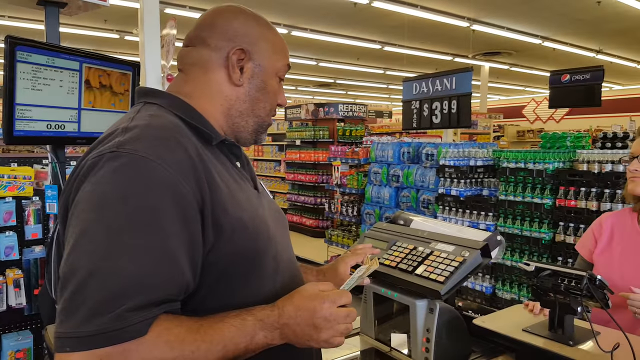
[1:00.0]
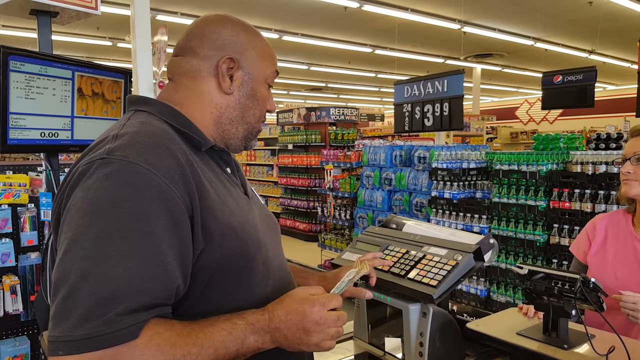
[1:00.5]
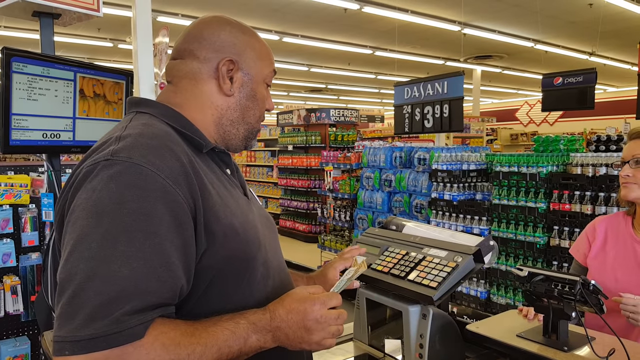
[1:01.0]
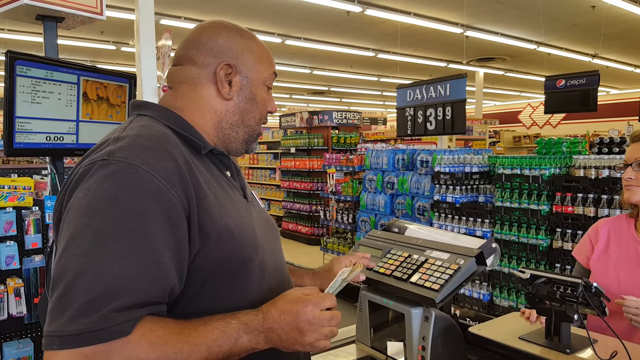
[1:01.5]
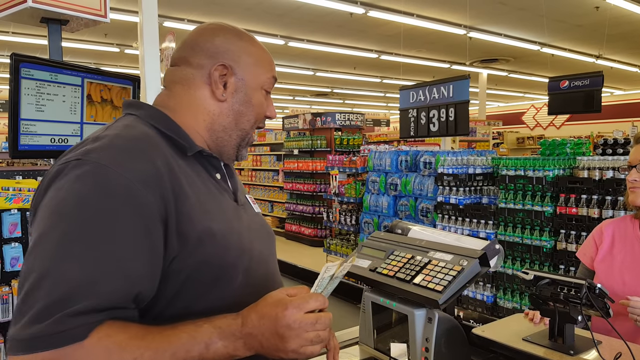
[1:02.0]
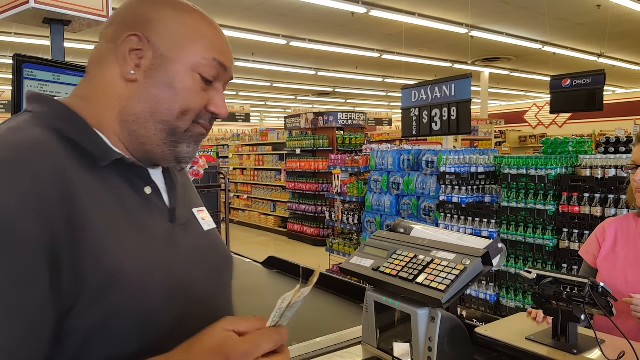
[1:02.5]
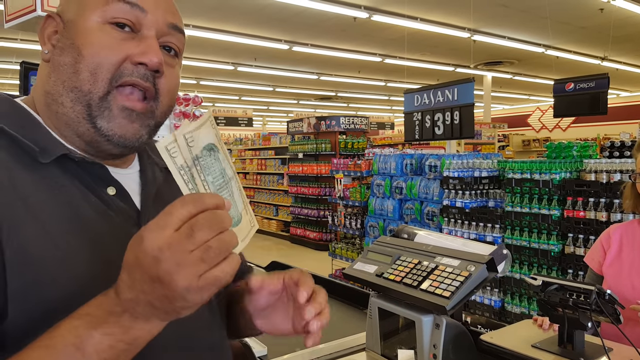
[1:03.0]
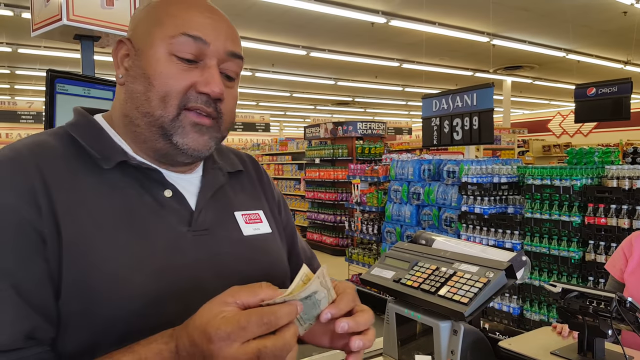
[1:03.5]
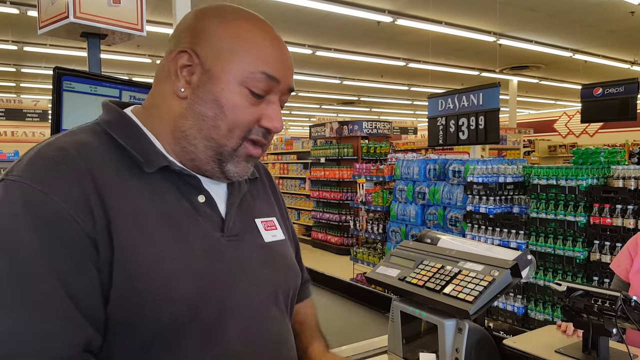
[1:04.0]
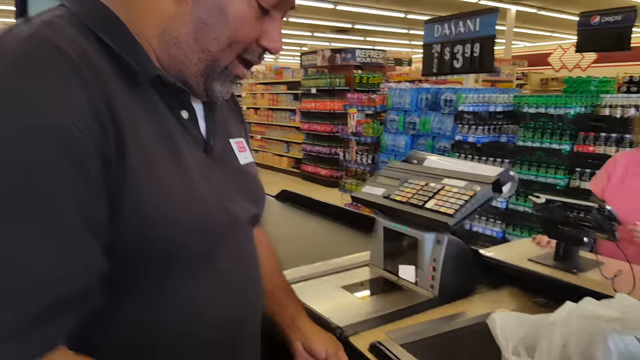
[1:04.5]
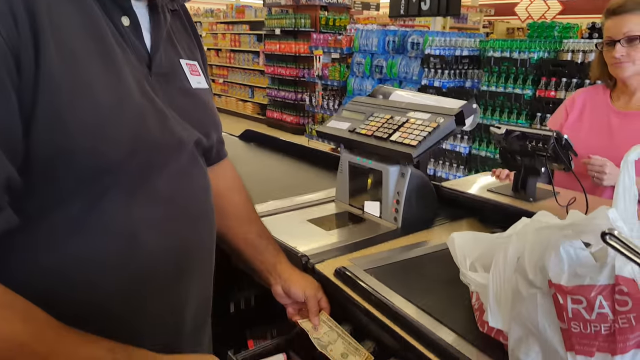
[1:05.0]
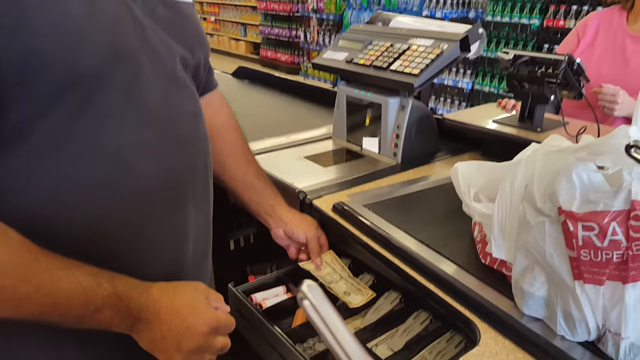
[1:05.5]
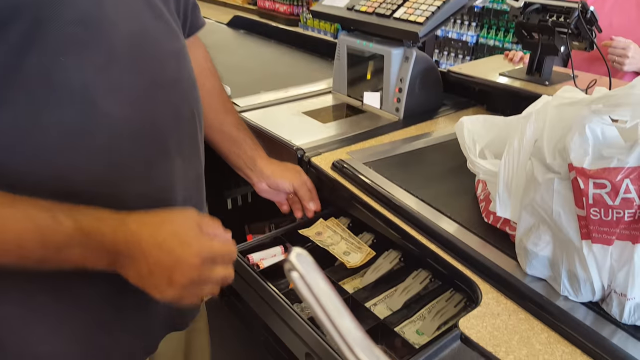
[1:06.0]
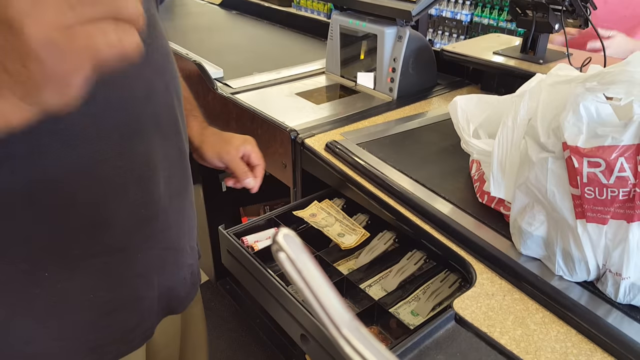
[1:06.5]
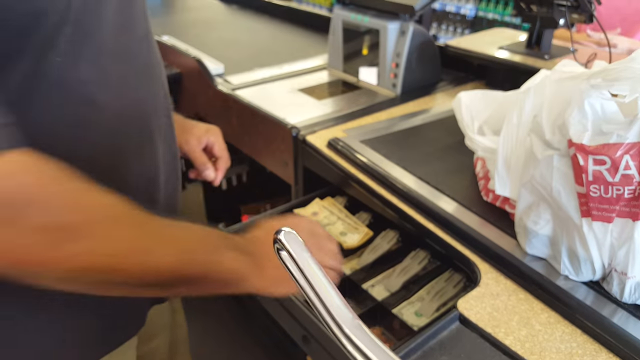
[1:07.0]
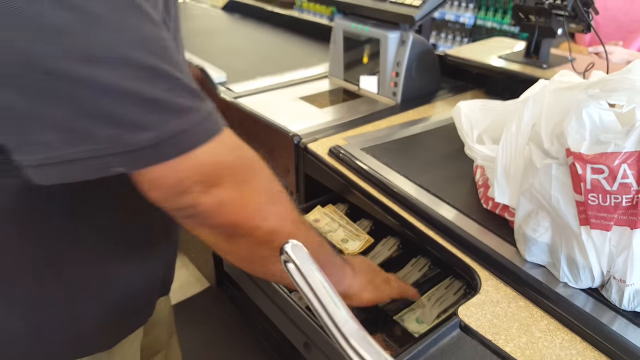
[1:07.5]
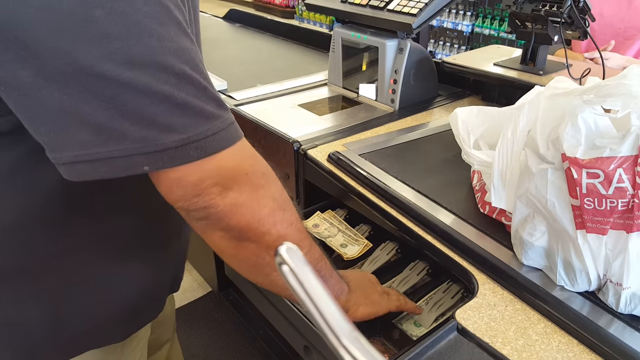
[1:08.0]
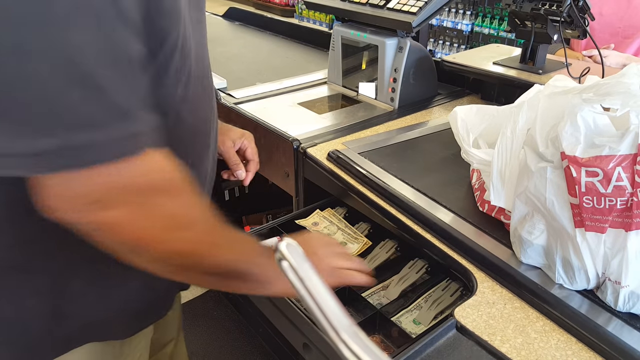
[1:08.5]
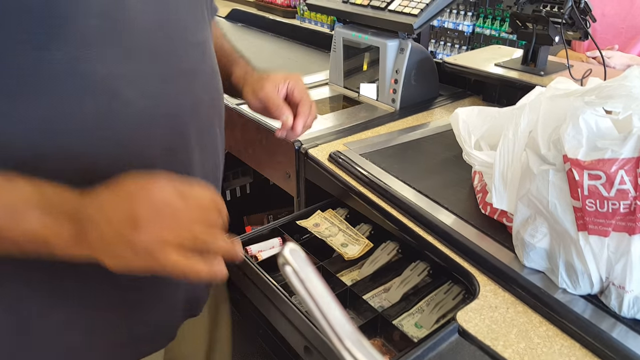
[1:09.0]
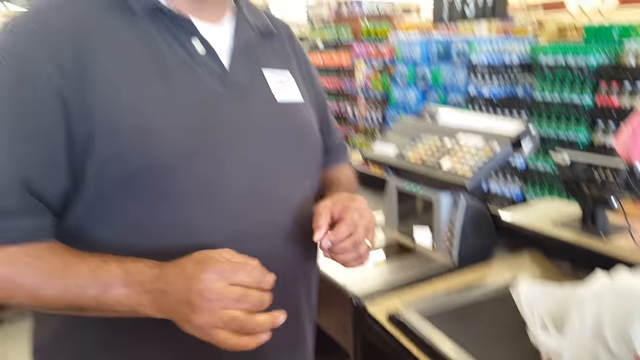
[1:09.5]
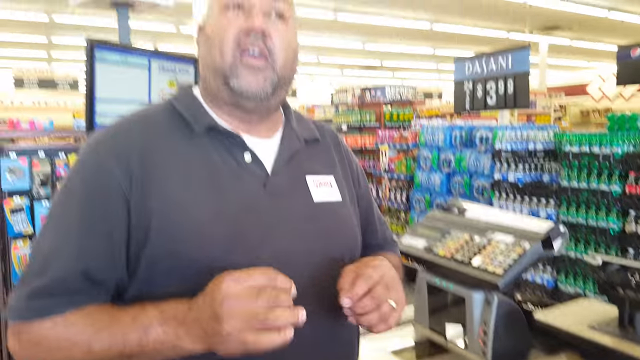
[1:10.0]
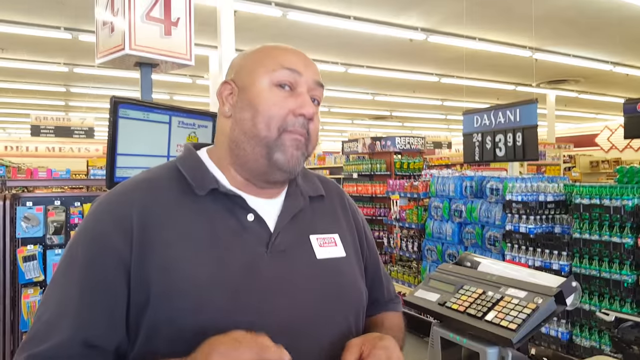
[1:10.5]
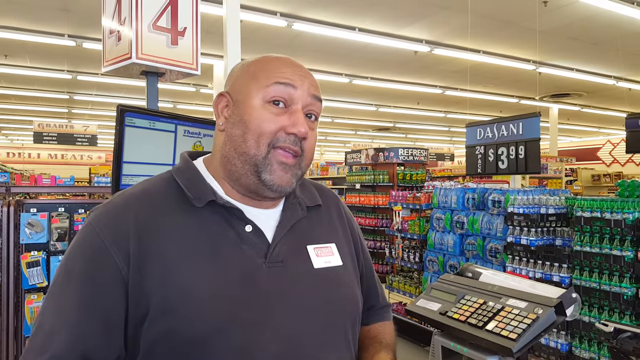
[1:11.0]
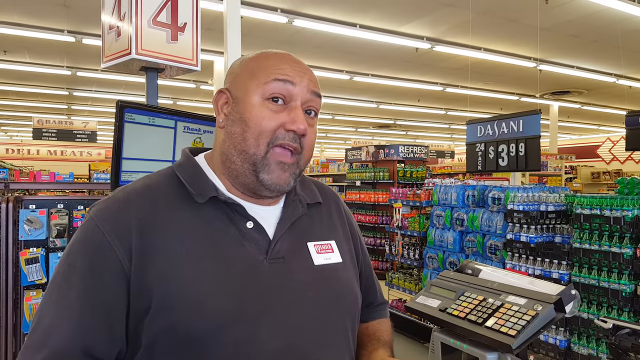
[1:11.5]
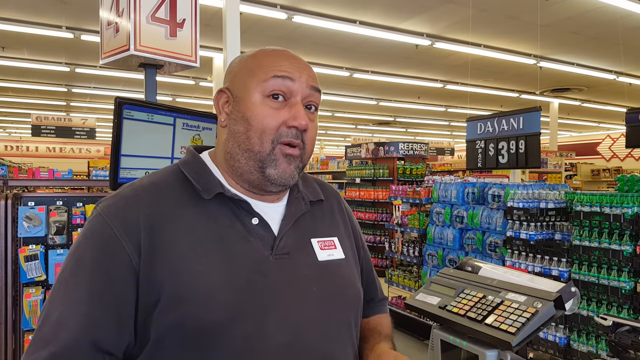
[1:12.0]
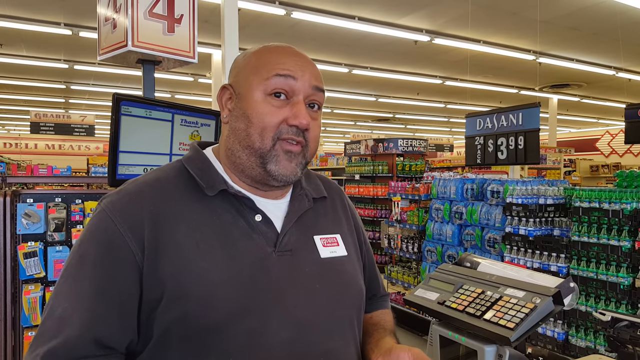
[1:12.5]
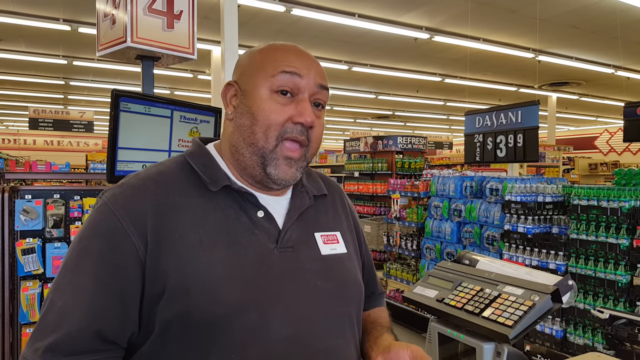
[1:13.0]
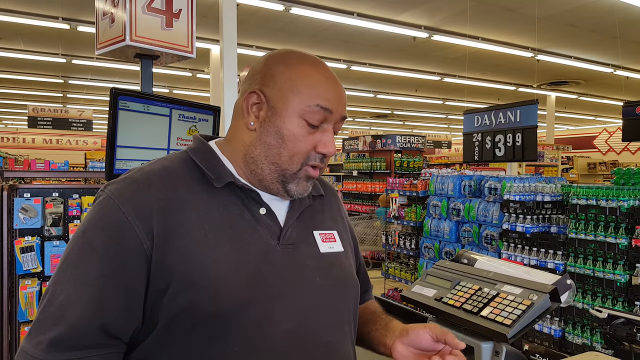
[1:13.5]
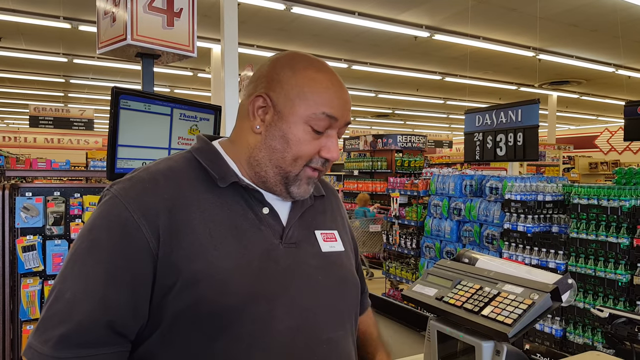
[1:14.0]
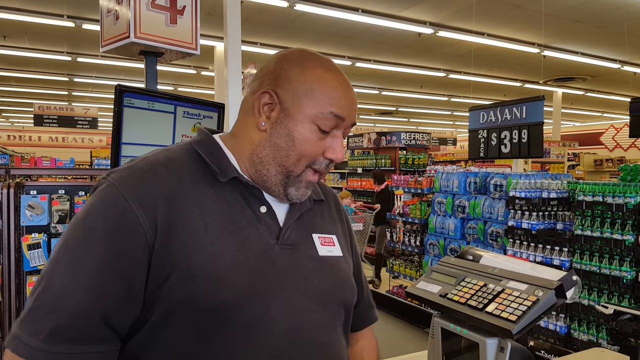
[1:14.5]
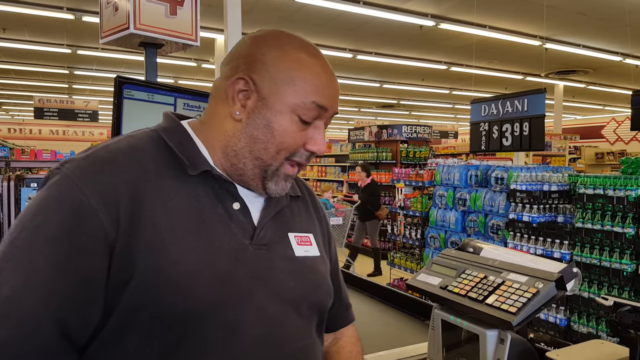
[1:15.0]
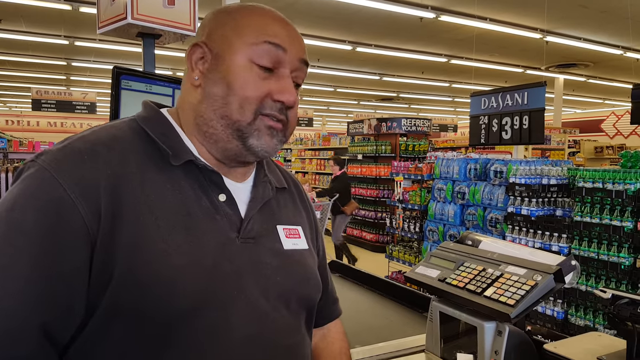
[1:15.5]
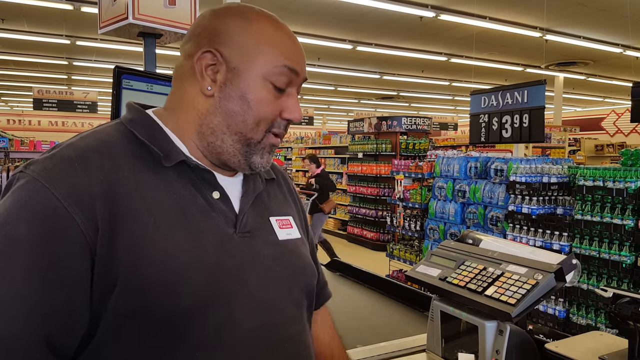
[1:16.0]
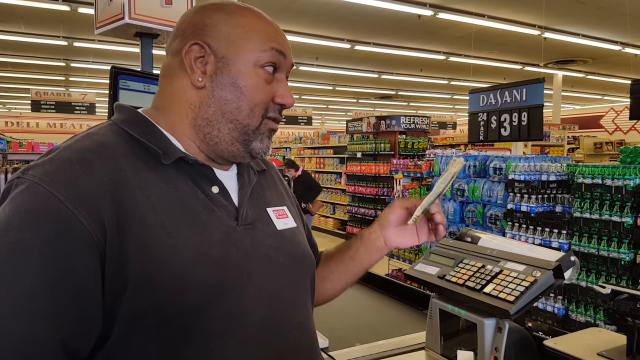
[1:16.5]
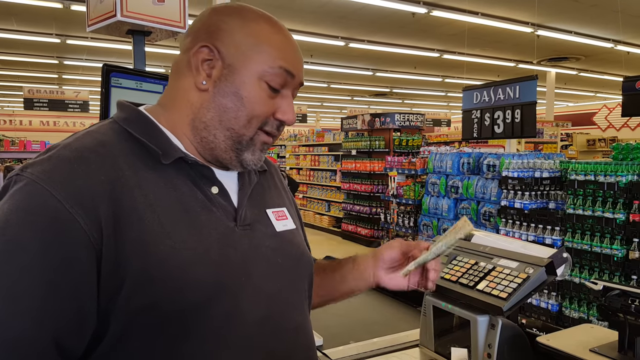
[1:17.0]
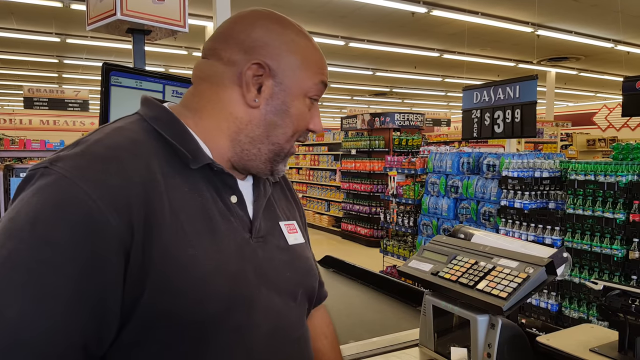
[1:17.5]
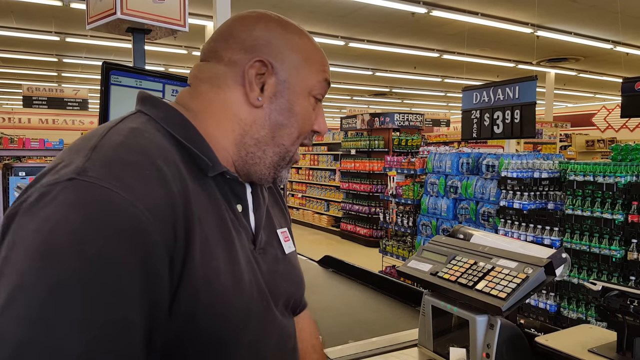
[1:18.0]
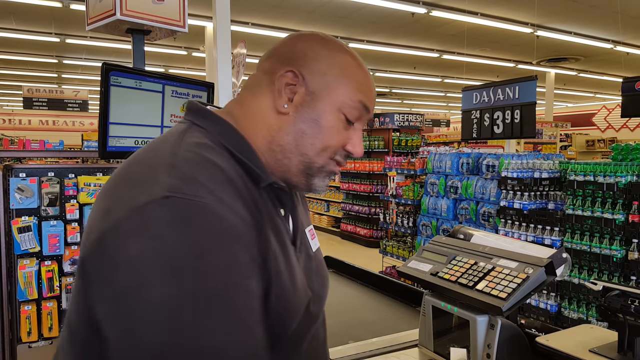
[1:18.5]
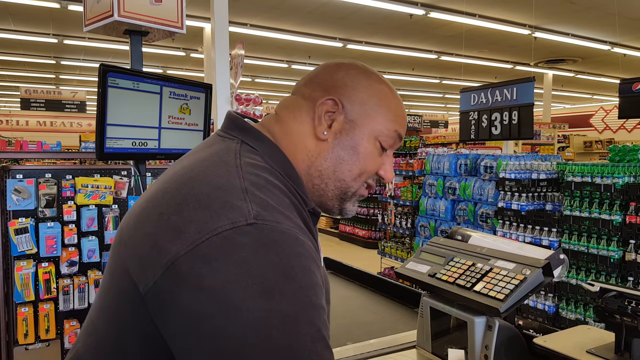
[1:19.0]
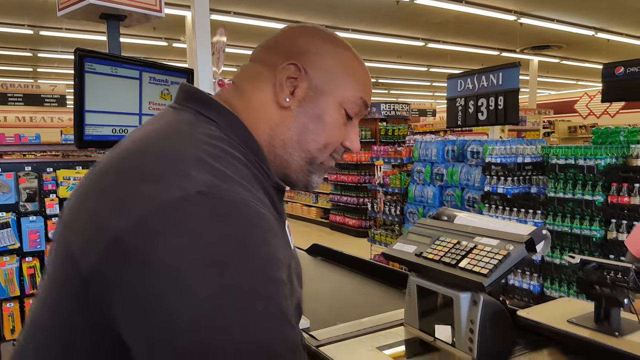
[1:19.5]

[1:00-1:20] The man presses keys again on the keyboard above his scanner, and the register door opens. He places the two $10 bills on top of the register rather than in their compartment. The camera goes upward to show him talking, looking at the camera and explaining something. He holds up the money again and looks at the customer. He apparently closes the register door, then puts the money on top of the register as it opens. He touches the $5 bill, looks at the camera while explaining something, and looks down again. He picks up the two $10 bills with his left hand and does something to the register door. Meanwhile, another customer walks by in the background of the grocery store. The man wears a wedding band on the ring finger of his left hand and small earrings. The video appears to be some sort of tutorial on how to be a cashier at this specific grocery store.